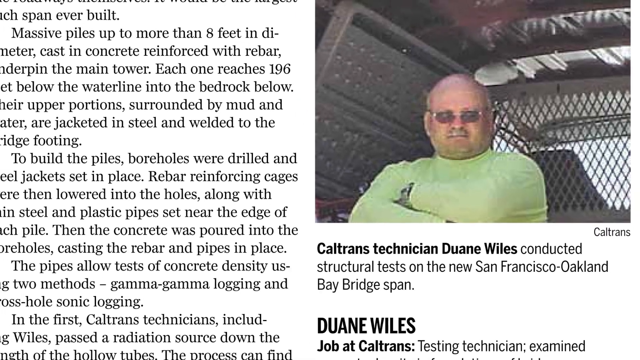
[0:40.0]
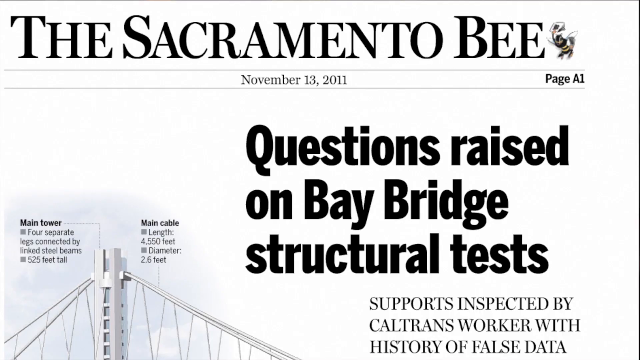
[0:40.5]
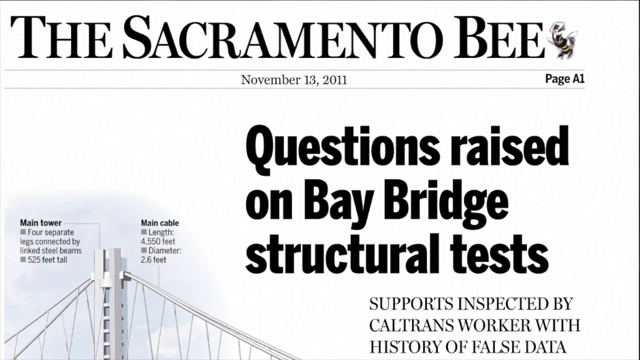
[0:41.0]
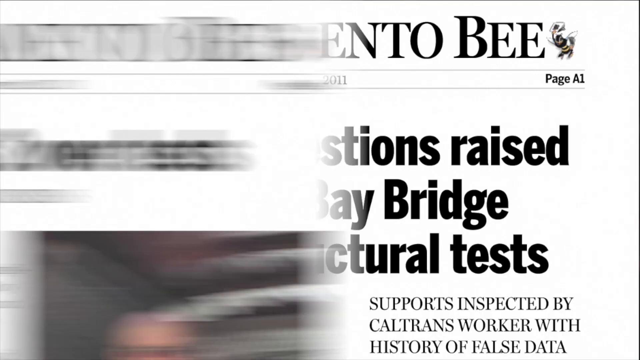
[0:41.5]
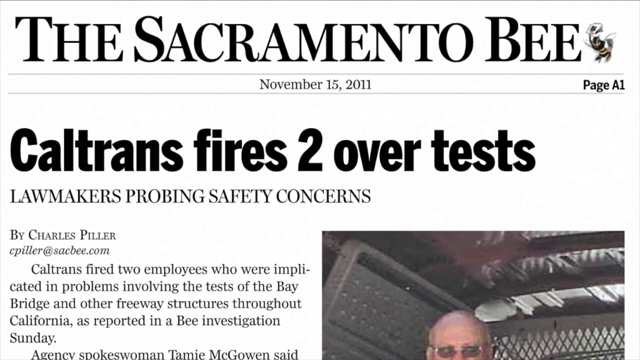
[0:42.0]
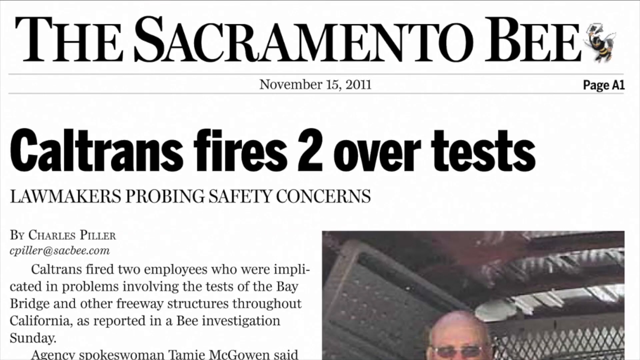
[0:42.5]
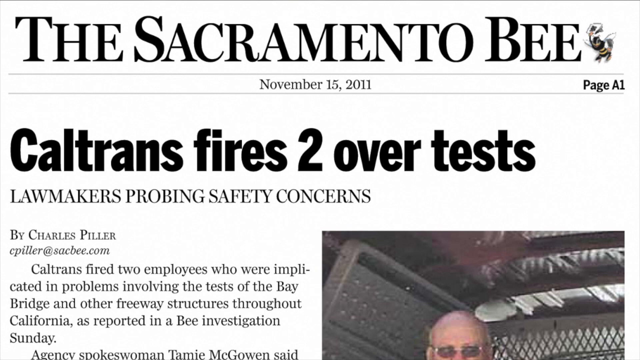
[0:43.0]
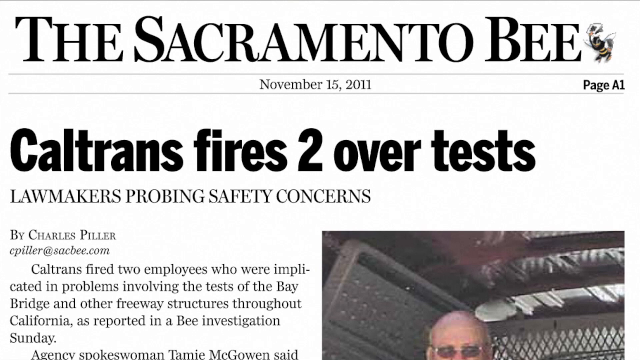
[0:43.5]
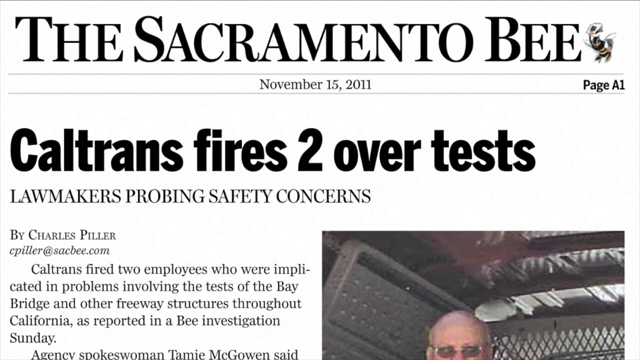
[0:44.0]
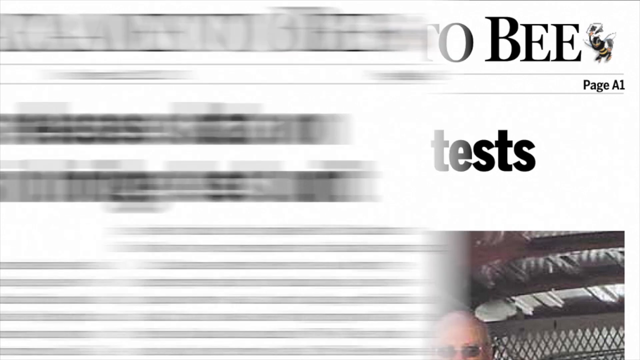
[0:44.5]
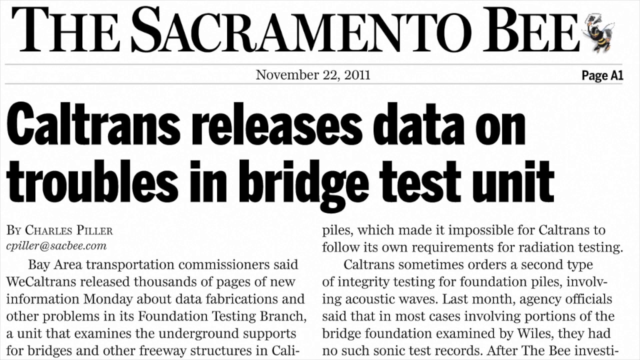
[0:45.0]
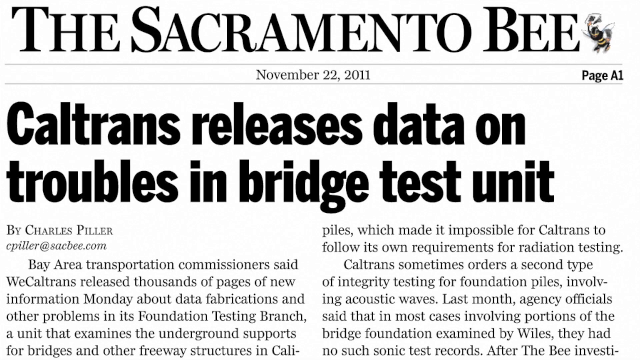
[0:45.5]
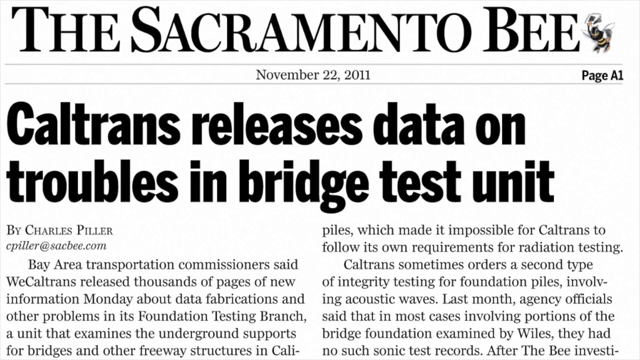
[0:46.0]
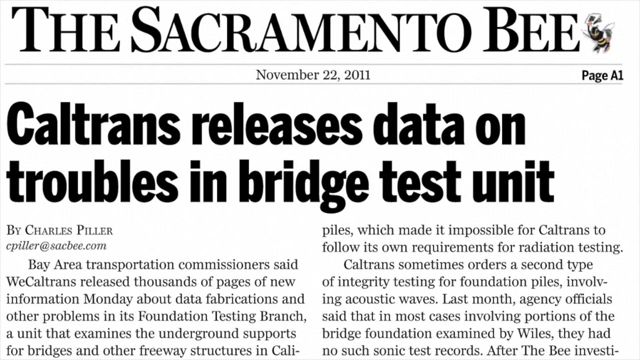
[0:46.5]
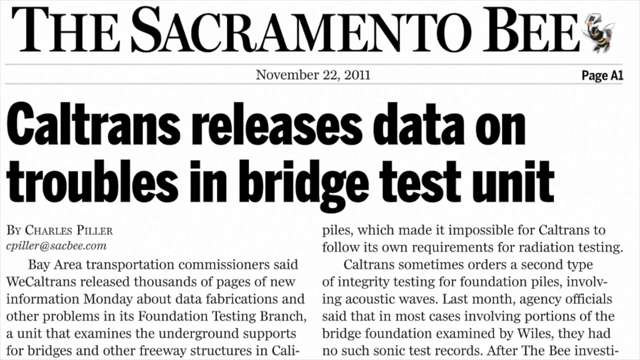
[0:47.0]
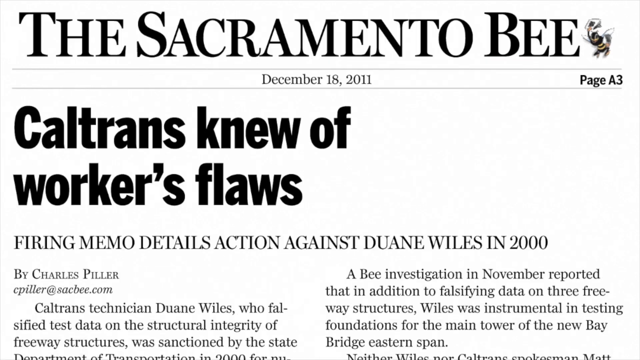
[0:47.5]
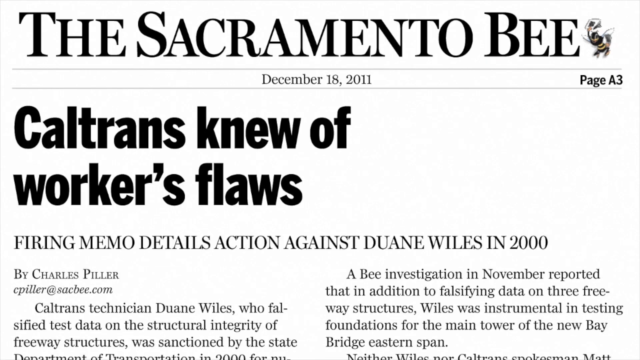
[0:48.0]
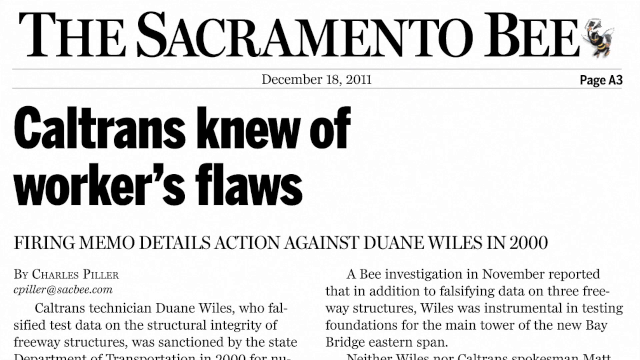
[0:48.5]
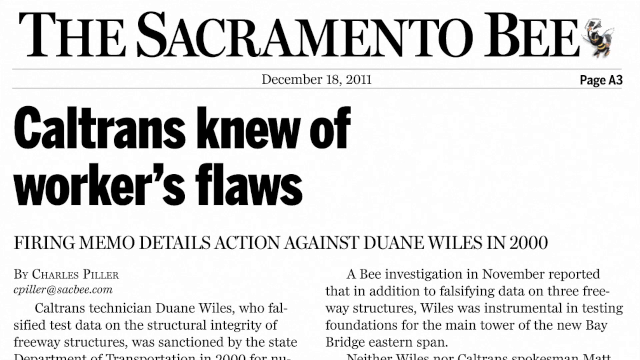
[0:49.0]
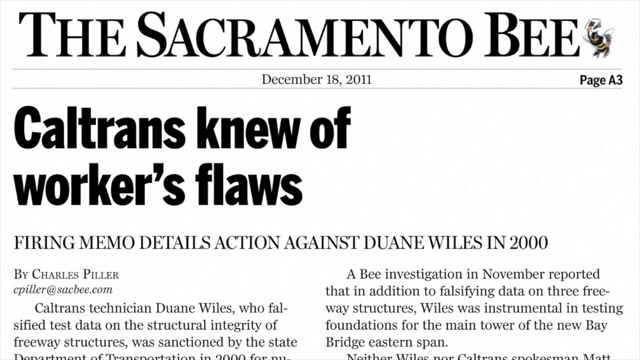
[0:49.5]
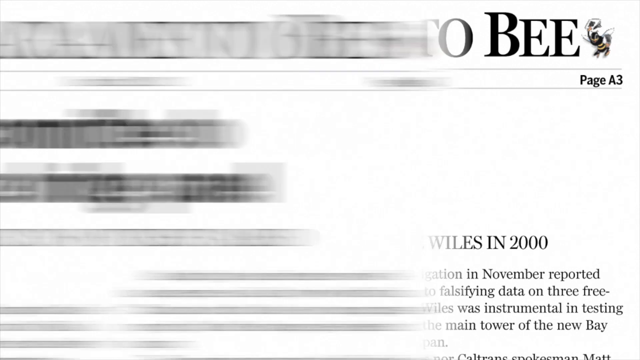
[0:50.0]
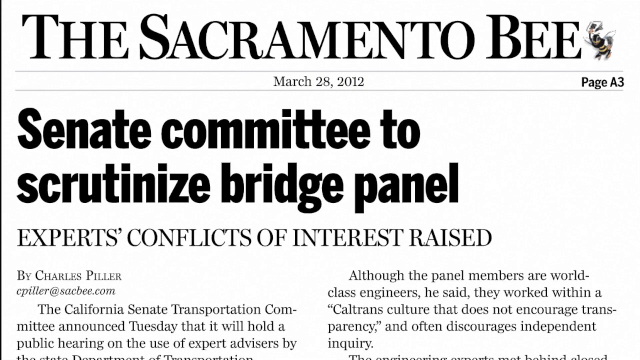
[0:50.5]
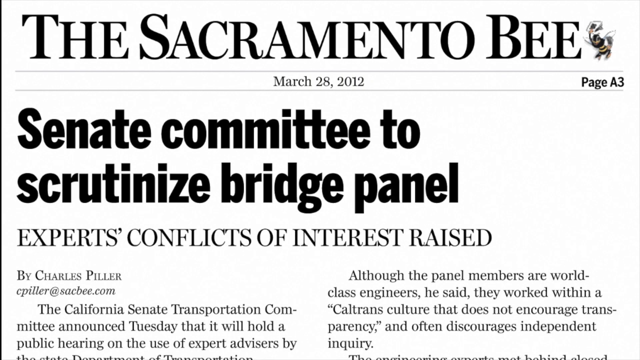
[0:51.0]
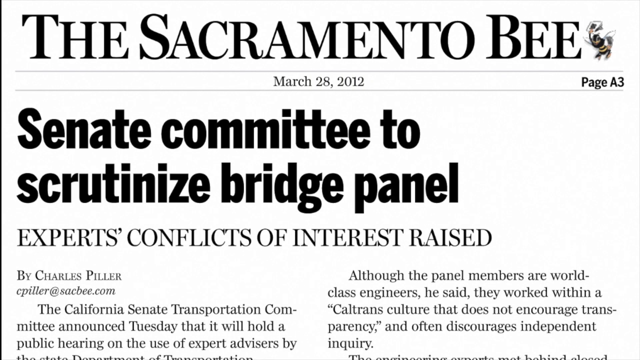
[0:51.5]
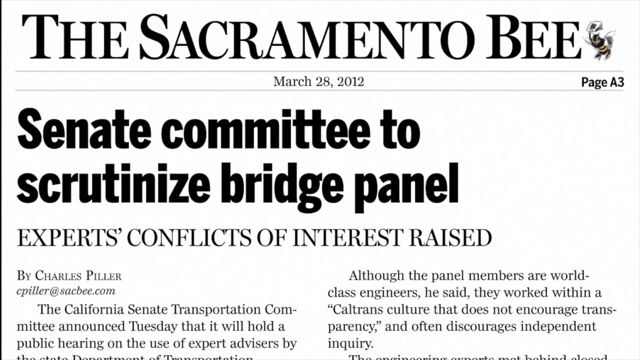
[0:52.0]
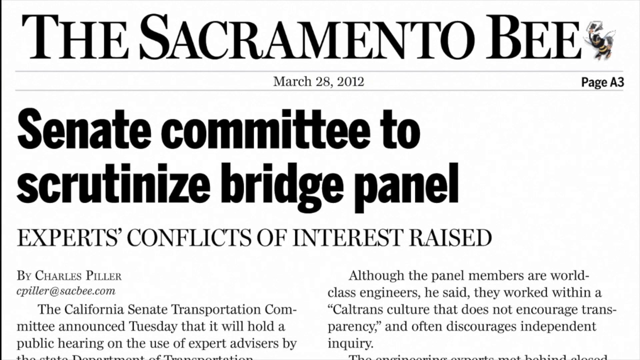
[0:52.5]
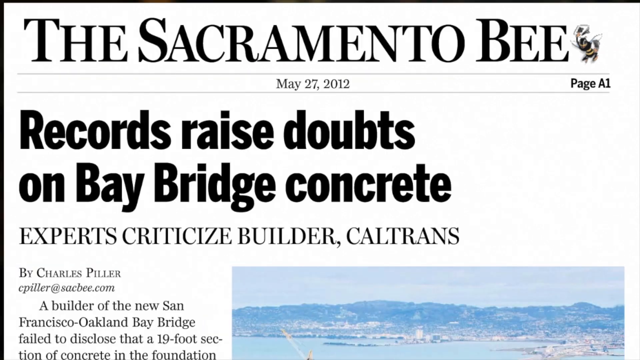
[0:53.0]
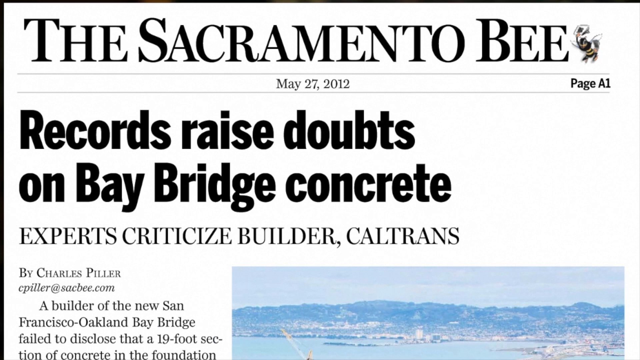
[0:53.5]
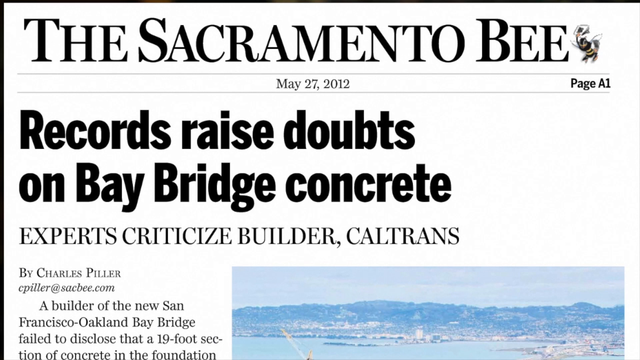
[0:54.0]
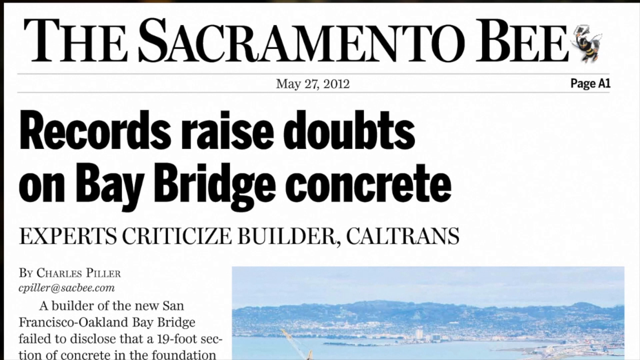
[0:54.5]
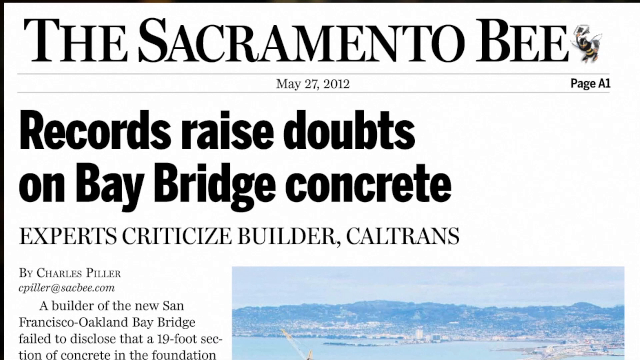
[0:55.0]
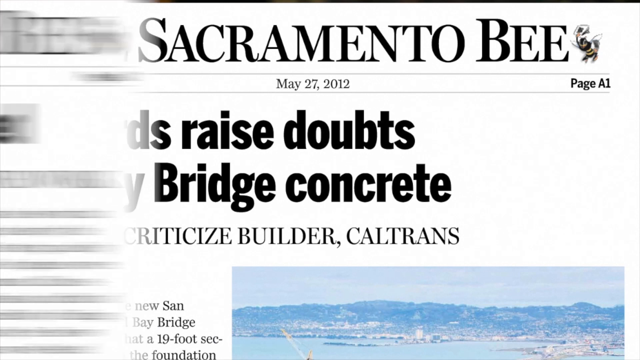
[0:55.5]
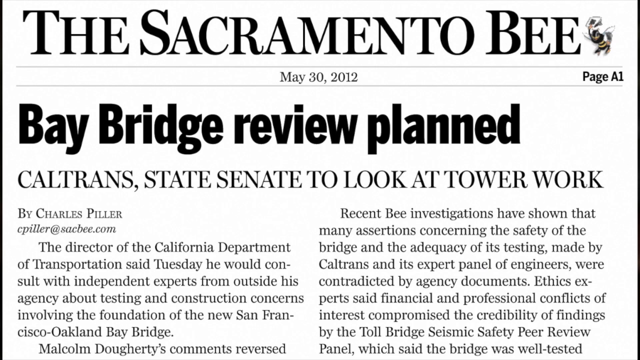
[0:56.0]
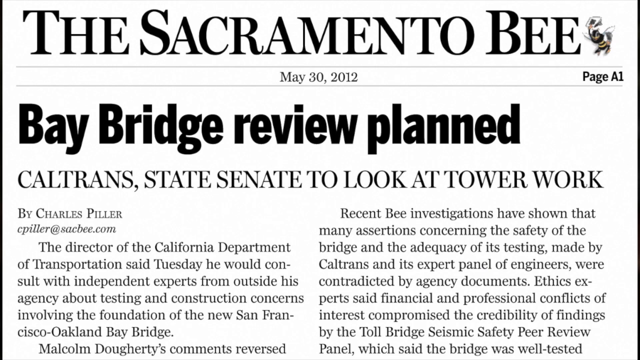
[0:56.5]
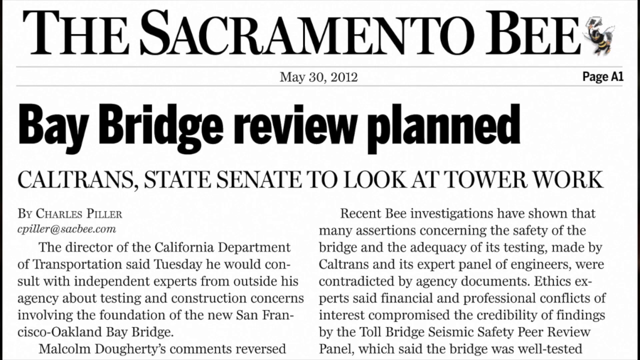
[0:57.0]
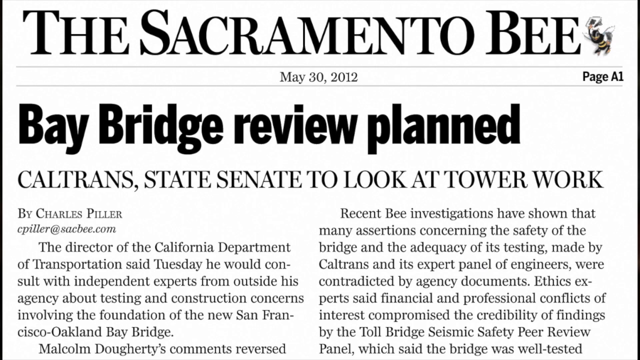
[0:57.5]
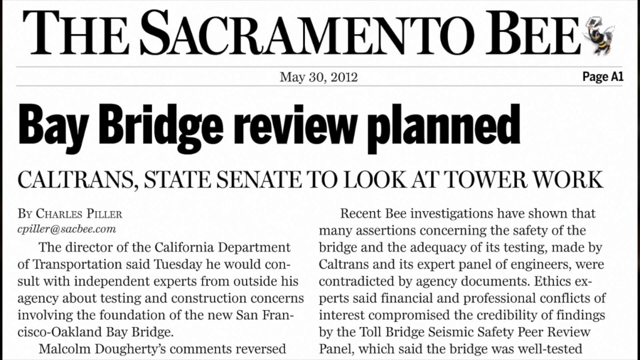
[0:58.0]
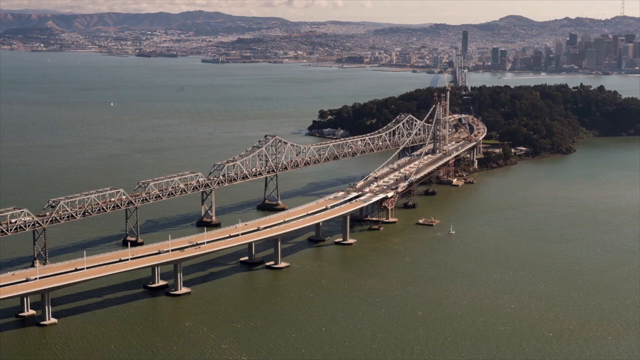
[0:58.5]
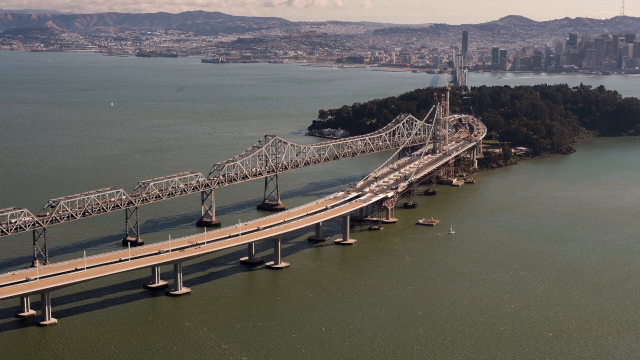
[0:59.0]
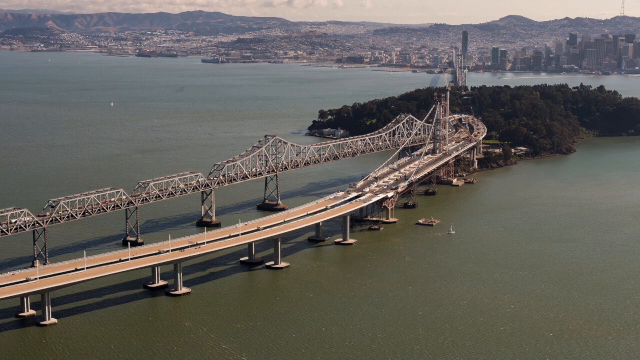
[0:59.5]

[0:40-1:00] A newspaper article shows a picture of a man in its top right. He wears a long-sleeved green shirt, folds his arms in front of his chest, has sunglasses on, is bald, and appears to be in his early 50s. Underneath his picture is the text "Caltrans technician, Duane Wiles, conducted structural tests on the new San Francisco-Oakland Bay Bridge span," and paragraphs of text surround the picture. The view moves to another newspaper clipping from the Sacramento Bee, seen from the top, with a title in black and, at the bottom right, the words "questions raised on Bay Bridge structural test." More Sacramento Bee clippings then slide over one after another, several from the left: one with the bold title "Caltrans fires two over test," one titled "Caltrans releases data on troubles in bridge test unit," one with a title beginning "Caltrans," one titled "Senate committee to scrutinize bridge panel," one with words ending "on Bay Bridge concrete," and one titled "Bay Bridge review planned." Next comes an aerial picture of what appears to be the Bay Bridge. In the upper right there appears to be almost an island with a forest on it, at the other end of the bridge, and in the top right the shore and a city on the shore are visible. The bridge is on the lower left side of the picture, surrounded by water.